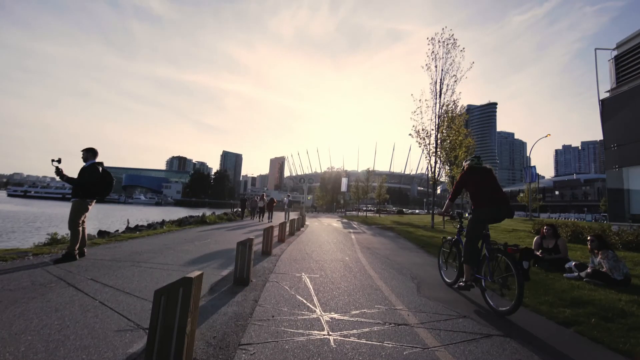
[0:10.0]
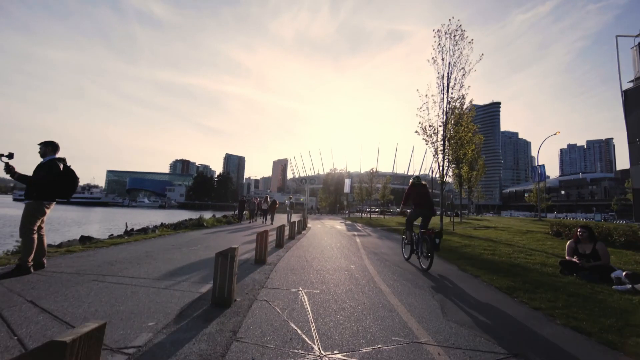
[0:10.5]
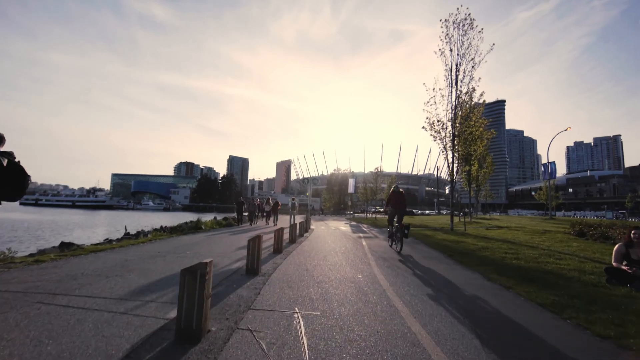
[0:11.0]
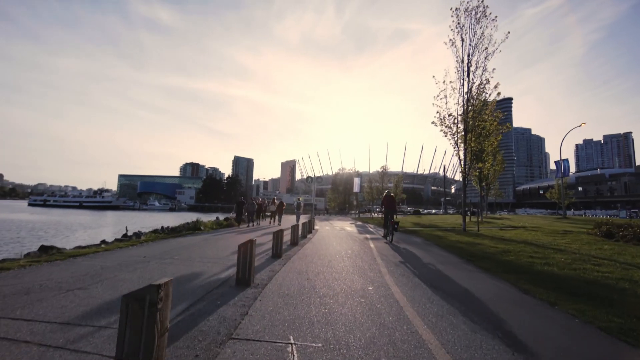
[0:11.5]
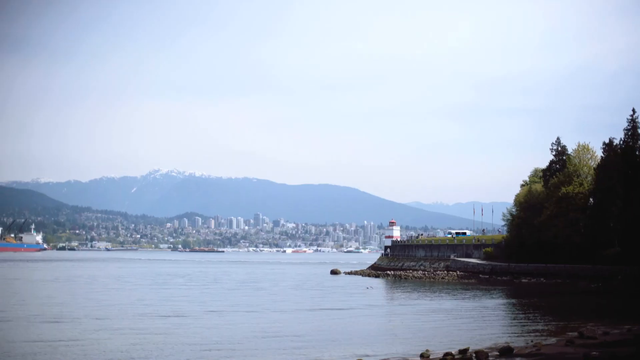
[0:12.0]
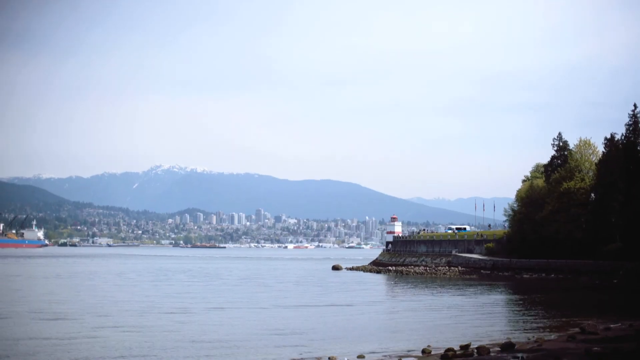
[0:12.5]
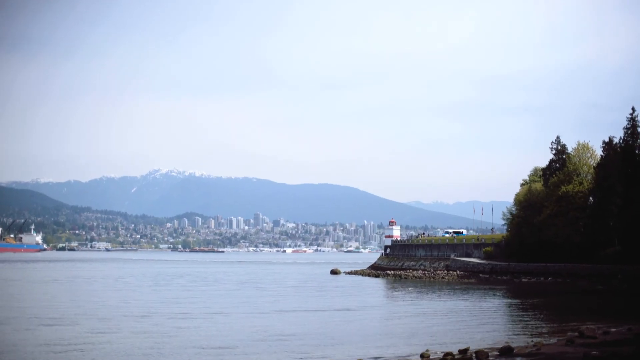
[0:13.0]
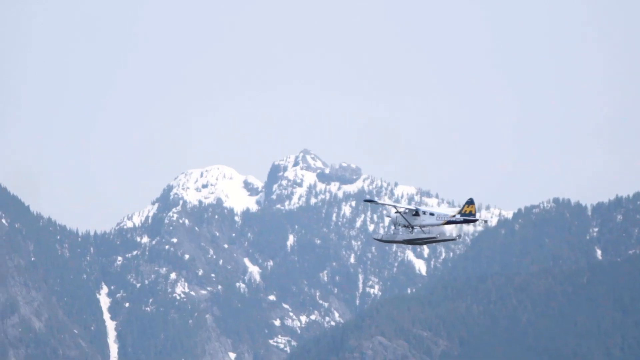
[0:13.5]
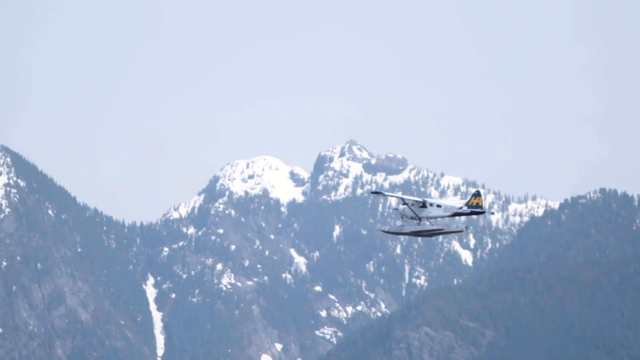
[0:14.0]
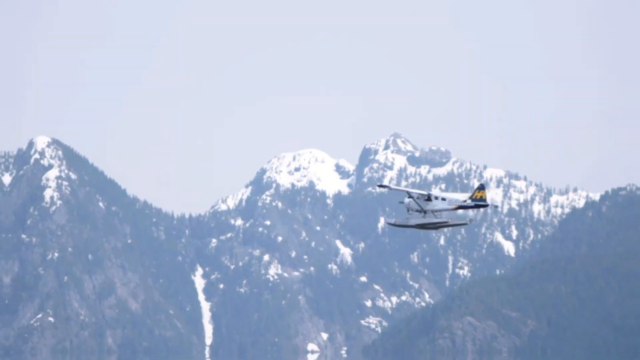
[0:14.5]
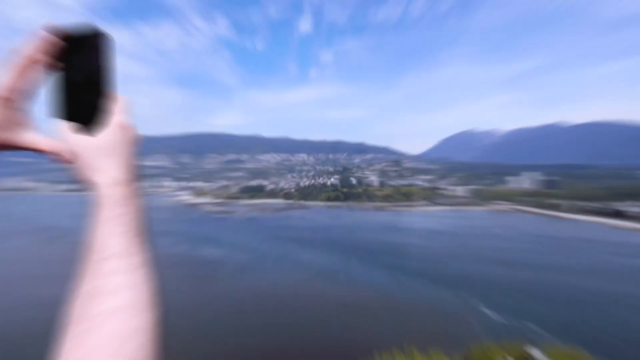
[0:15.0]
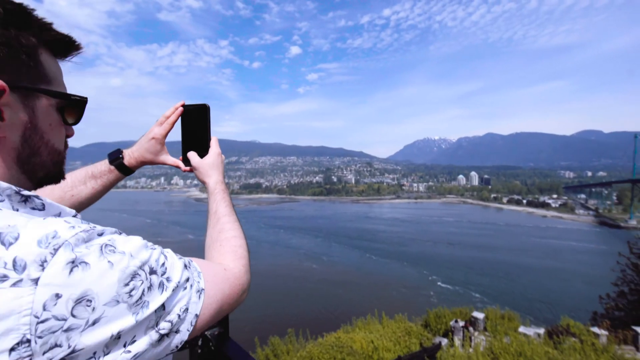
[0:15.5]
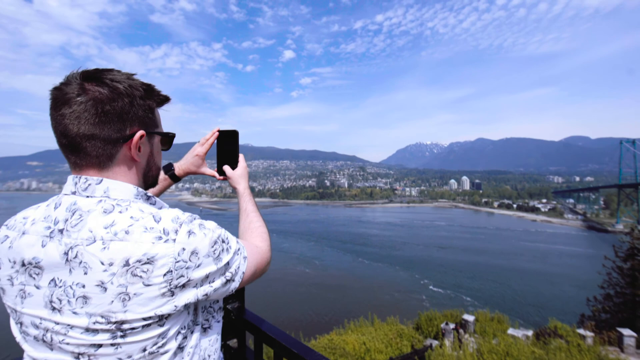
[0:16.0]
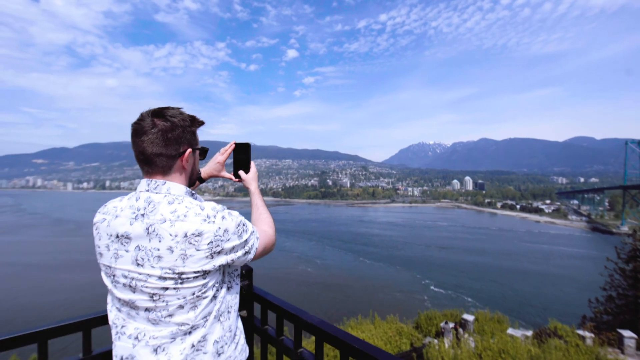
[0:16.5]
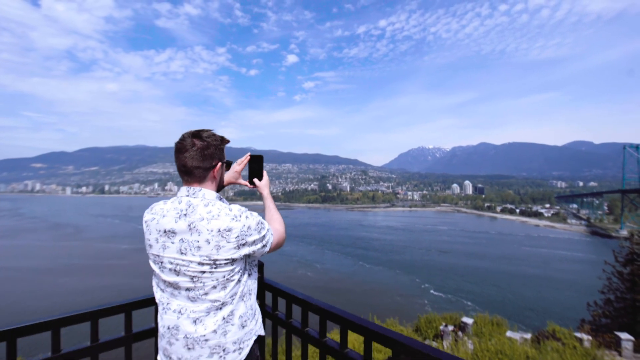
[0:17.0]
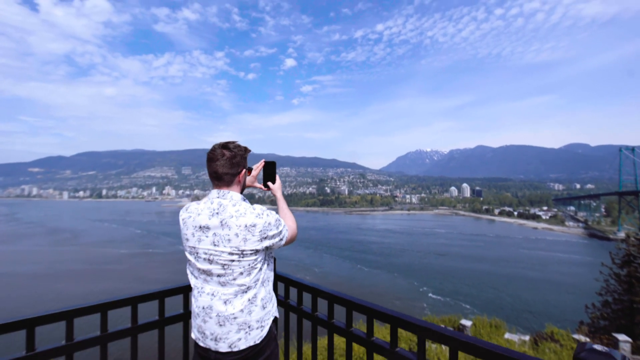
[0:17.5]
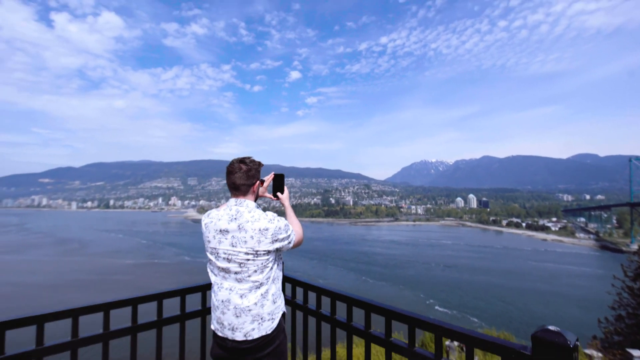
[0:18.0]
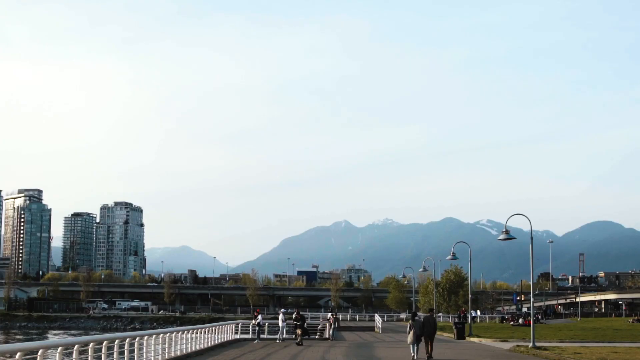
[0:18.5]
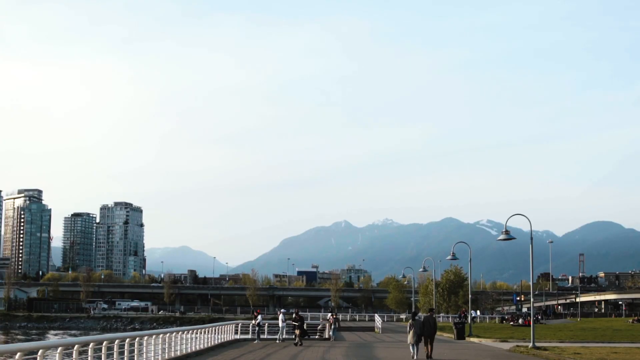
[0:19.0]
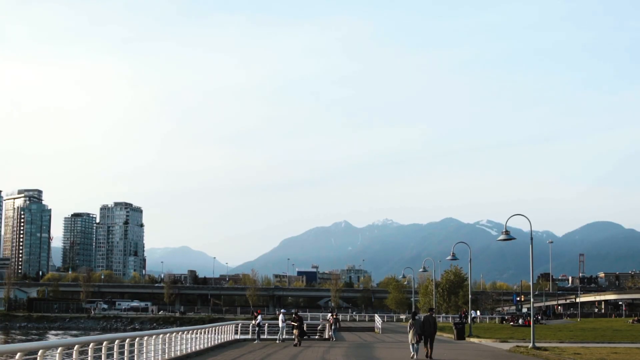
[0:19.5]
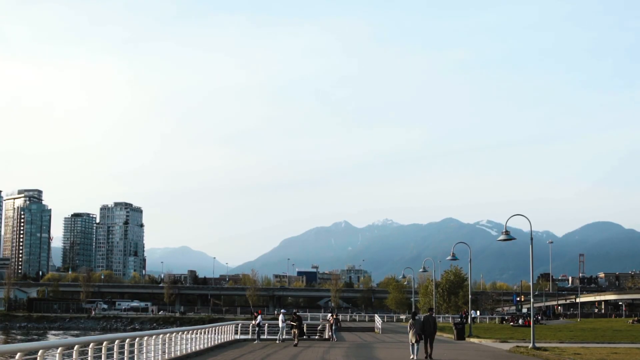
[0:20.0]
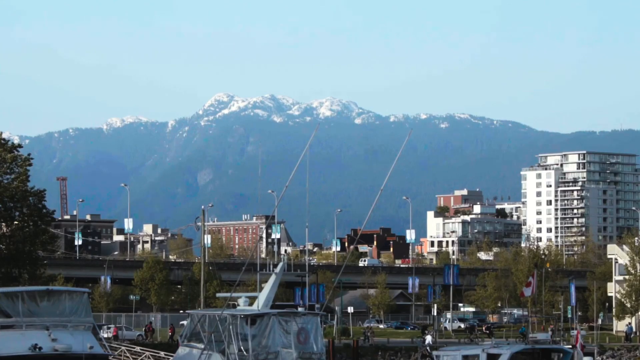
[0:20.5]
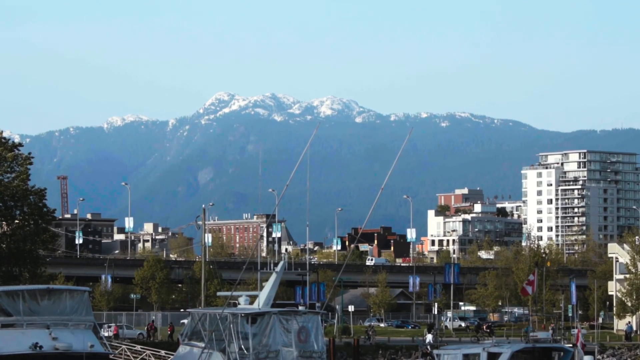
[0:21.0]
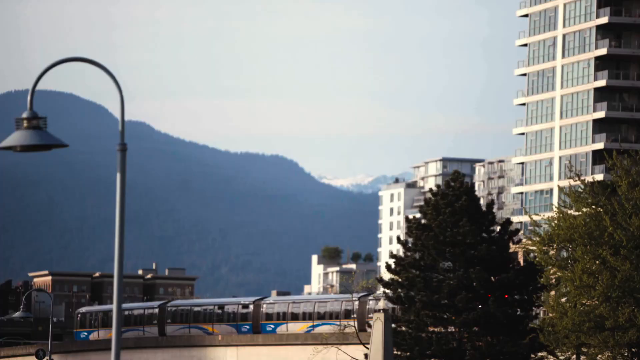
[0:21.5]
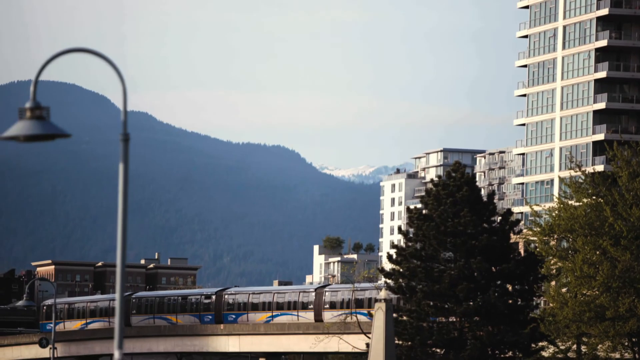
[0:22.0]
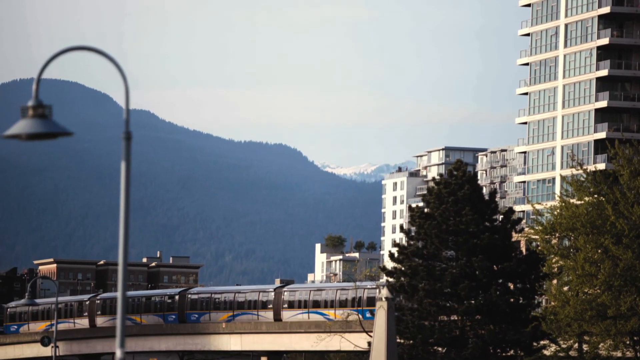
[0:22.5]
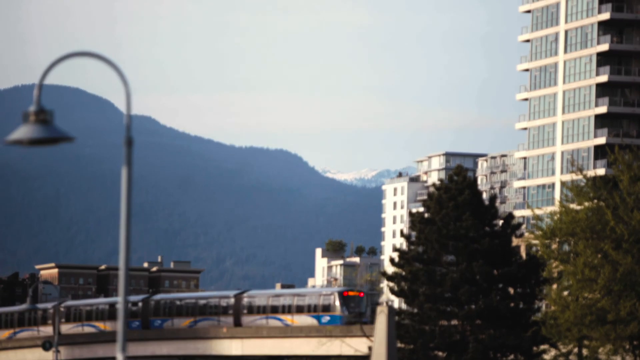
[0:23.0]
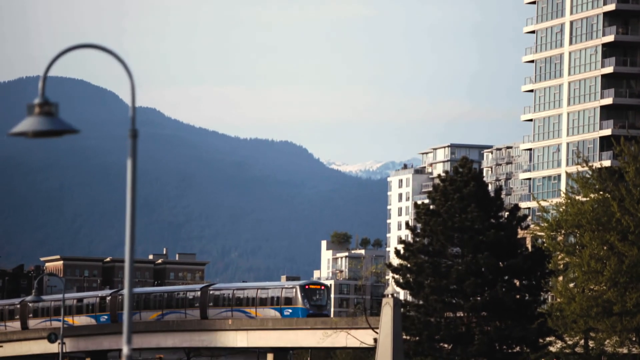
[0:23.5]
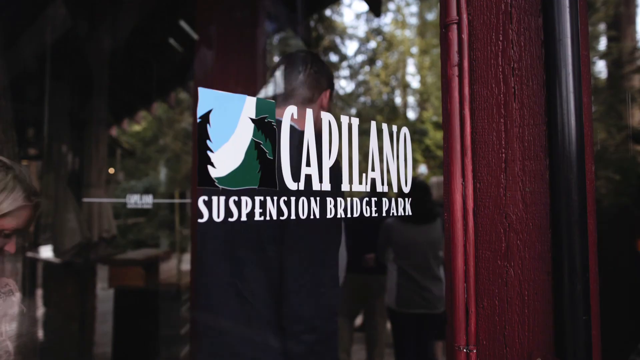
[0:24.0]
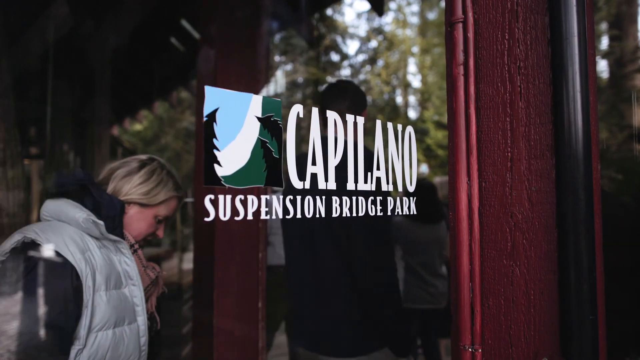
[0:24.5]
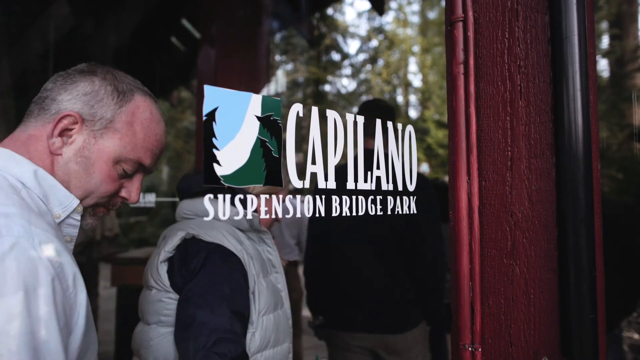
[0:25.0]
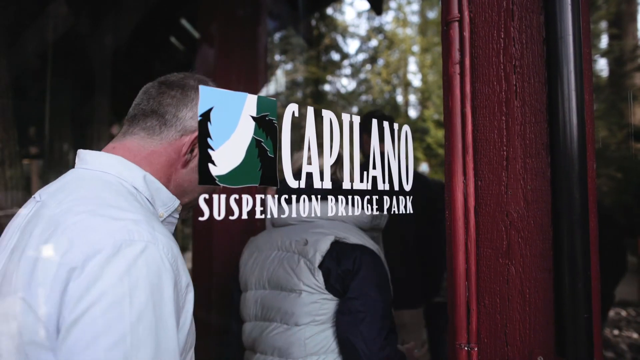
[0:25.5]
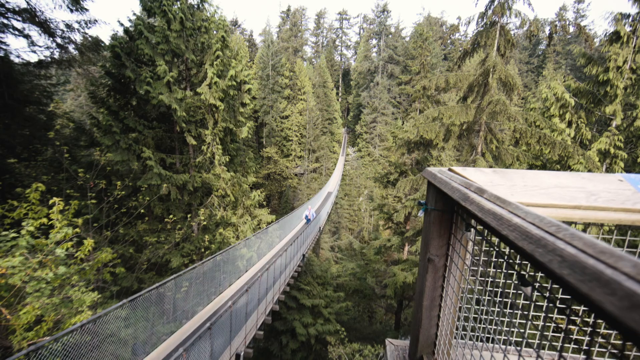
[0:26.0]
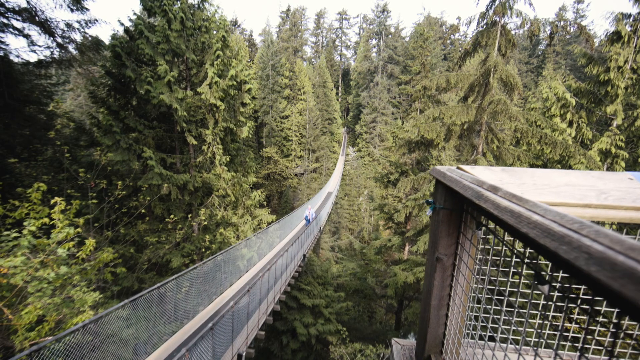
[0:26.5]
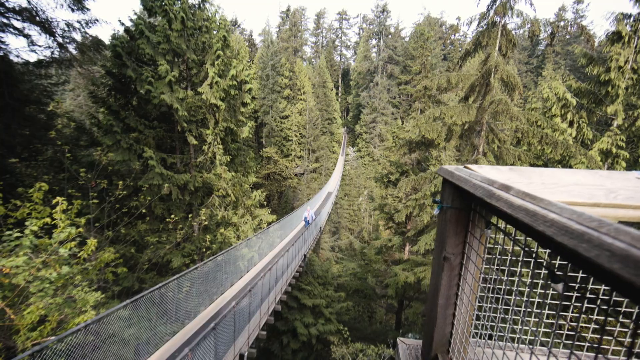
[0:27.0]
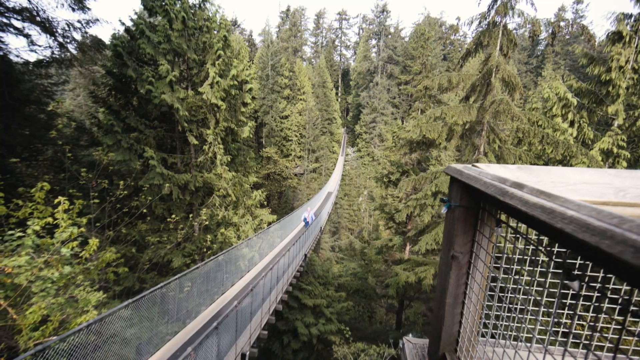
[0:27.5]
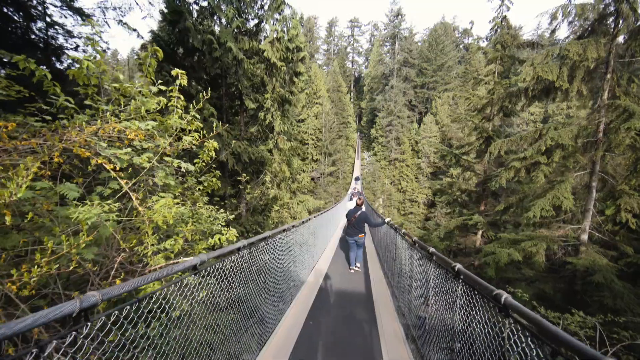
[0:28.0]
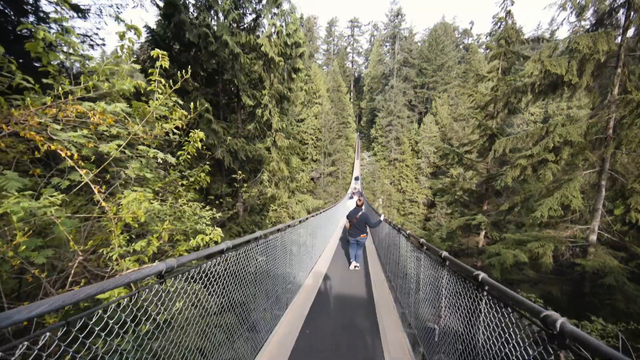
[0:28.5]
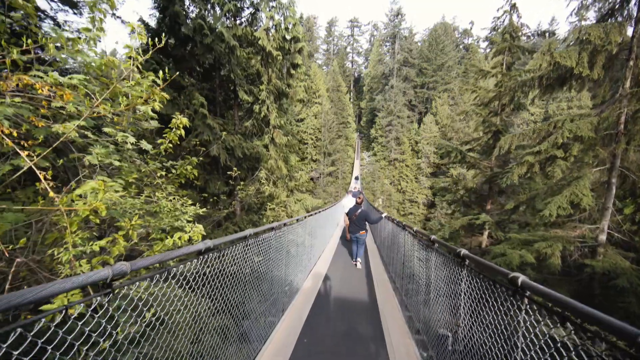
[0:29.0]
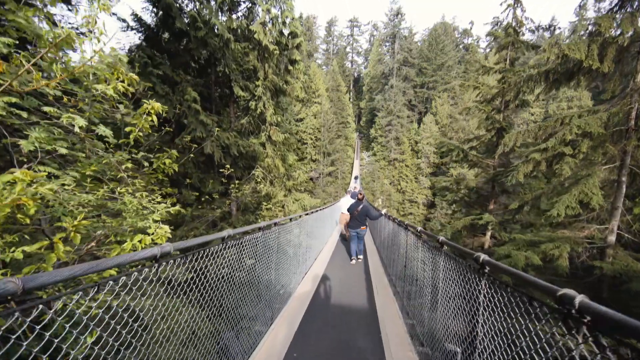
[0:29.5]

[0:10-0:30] Outdoors, probably around sunset, the sky has a very purplish-red hue. The footage is filmed on a pedestrian bike and walk path next to a body of water, apparently in a downtown area, since buildings are visible in the distance. The next shot overlooks a body of water with some type of town on a bay, and thick green trees on the right. After that comes a mountain with a white snow cap, with a seaplane flying in the sky. The camera then pans out away from it, edited so that it looks like it zooms backwards through a man's smartphone. The man stands on a ledge with his smartphone aimed out over a landscape, and the camera pans further back away from him to show the whole landscape. The video then cuts to a skyline.